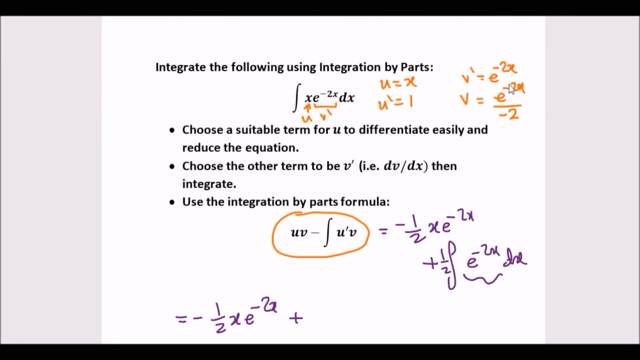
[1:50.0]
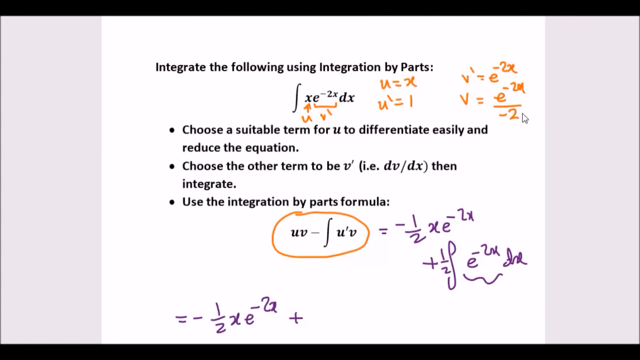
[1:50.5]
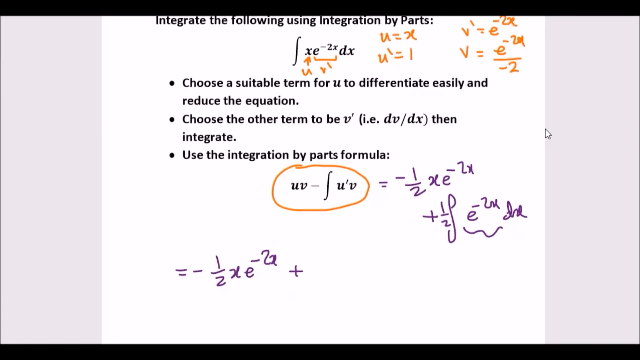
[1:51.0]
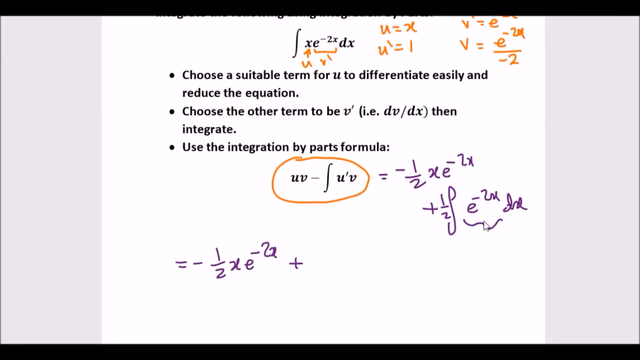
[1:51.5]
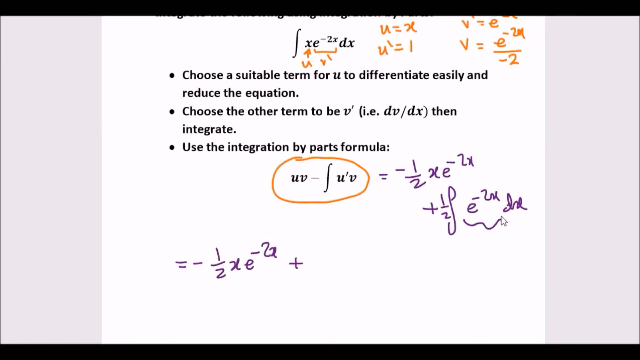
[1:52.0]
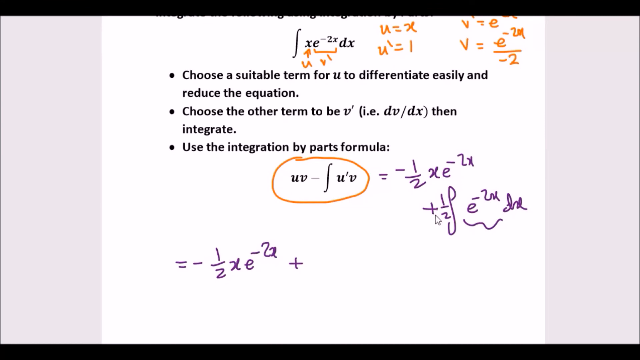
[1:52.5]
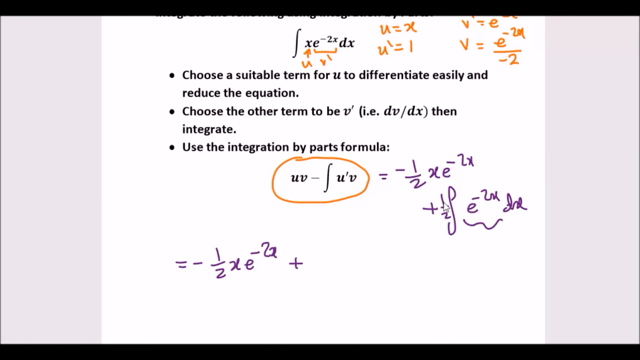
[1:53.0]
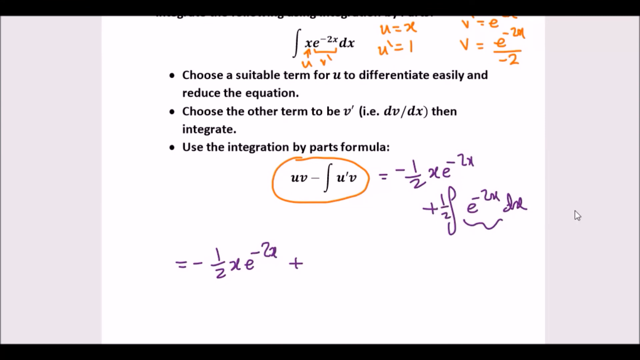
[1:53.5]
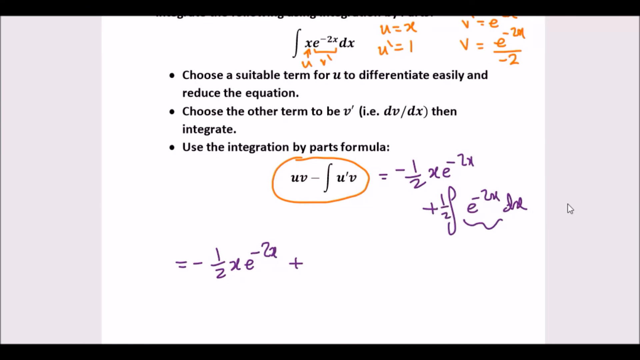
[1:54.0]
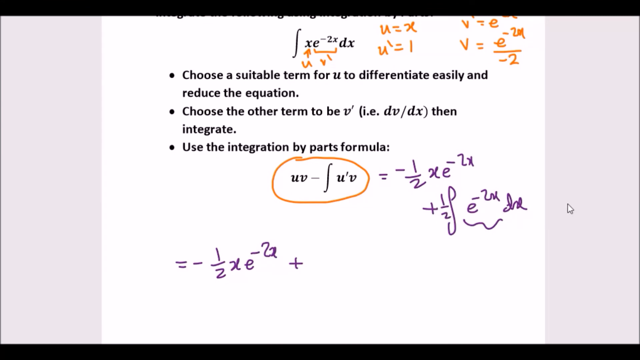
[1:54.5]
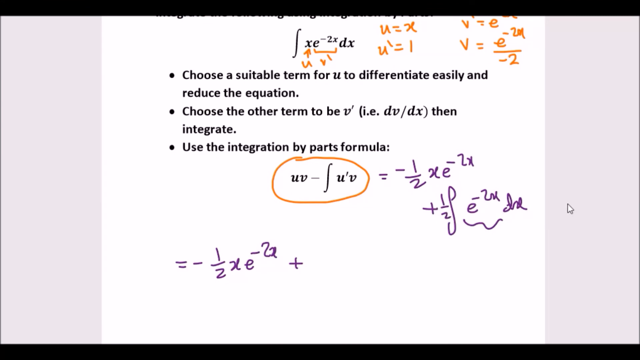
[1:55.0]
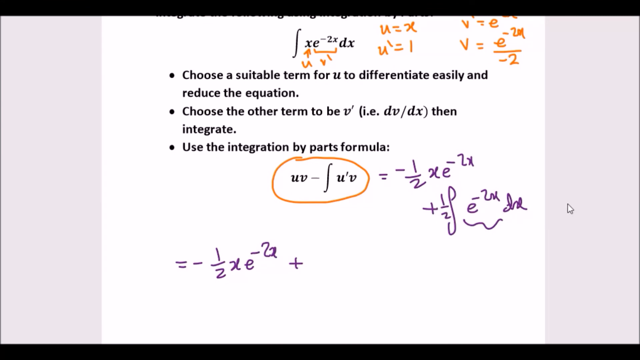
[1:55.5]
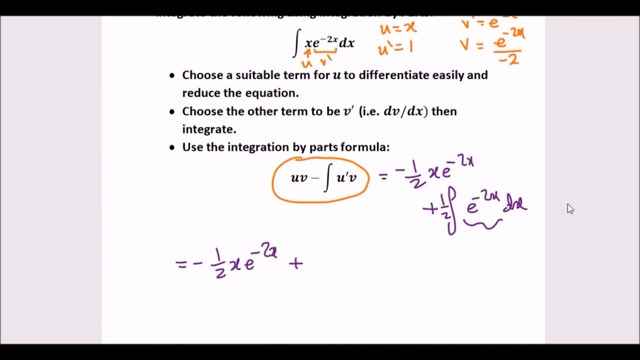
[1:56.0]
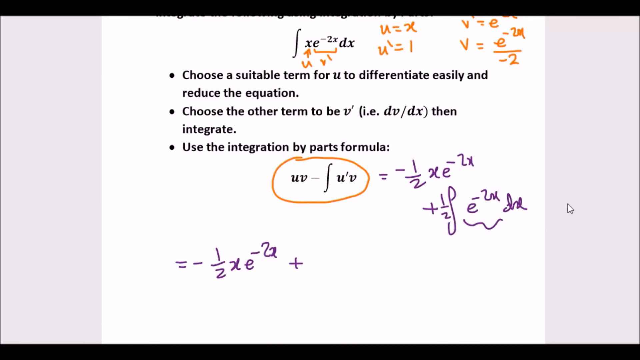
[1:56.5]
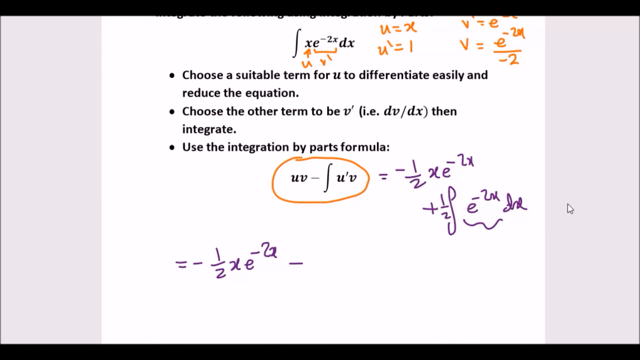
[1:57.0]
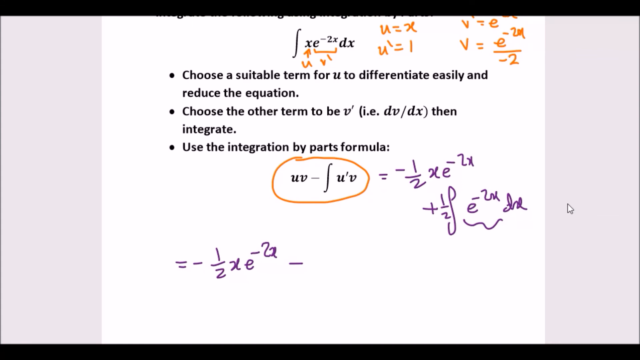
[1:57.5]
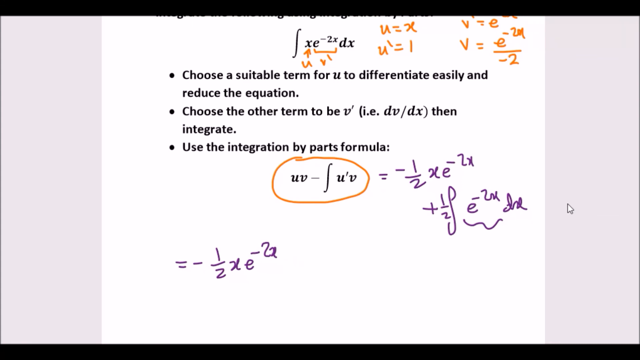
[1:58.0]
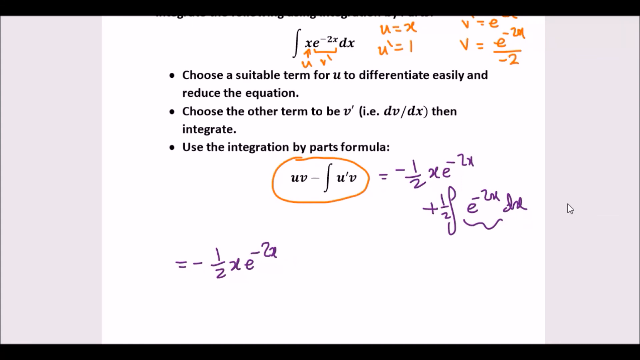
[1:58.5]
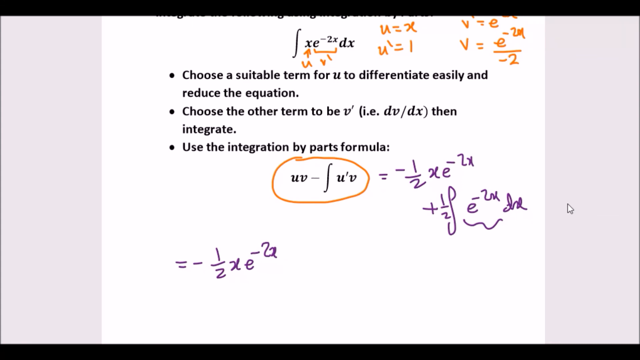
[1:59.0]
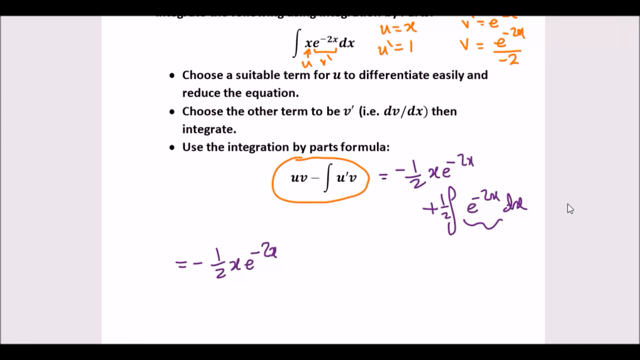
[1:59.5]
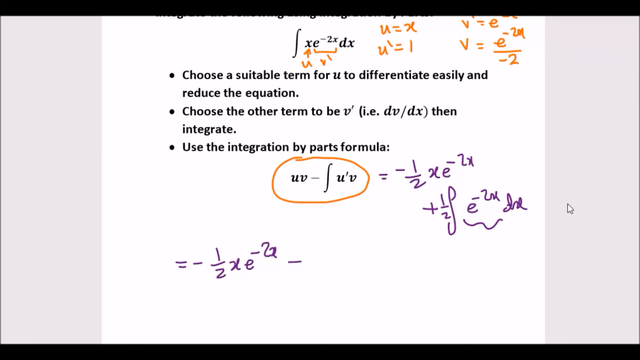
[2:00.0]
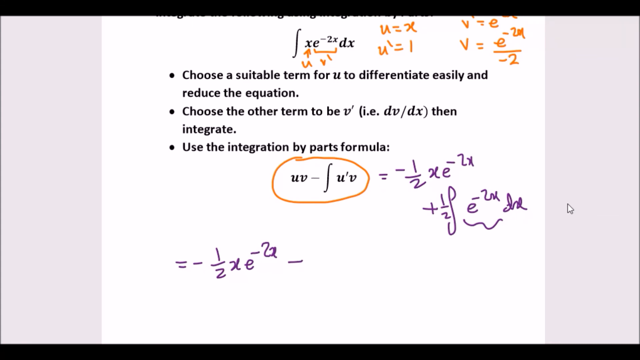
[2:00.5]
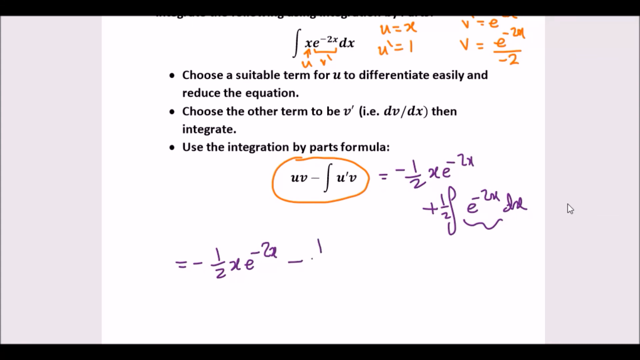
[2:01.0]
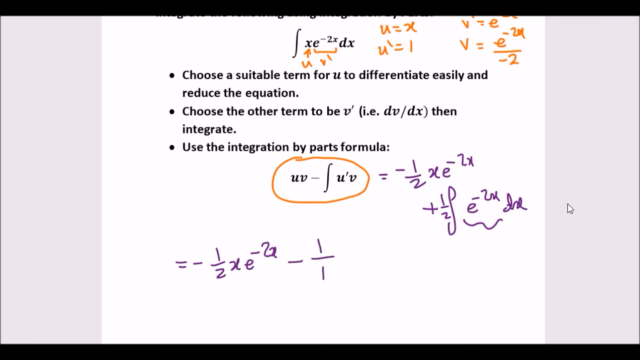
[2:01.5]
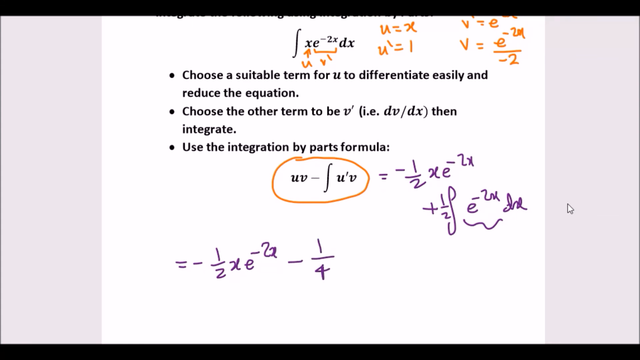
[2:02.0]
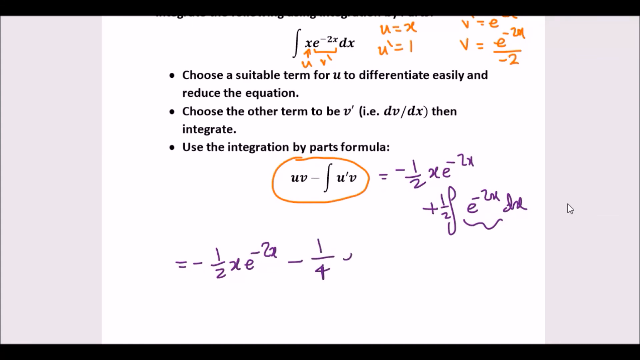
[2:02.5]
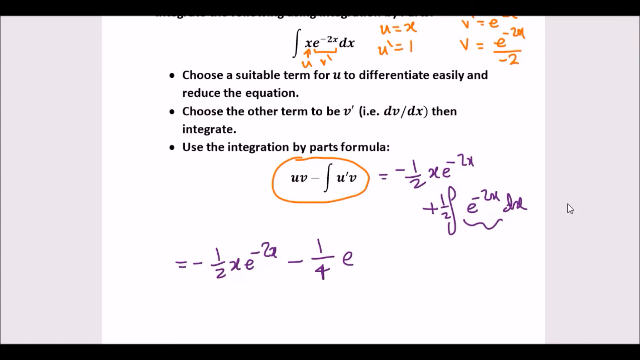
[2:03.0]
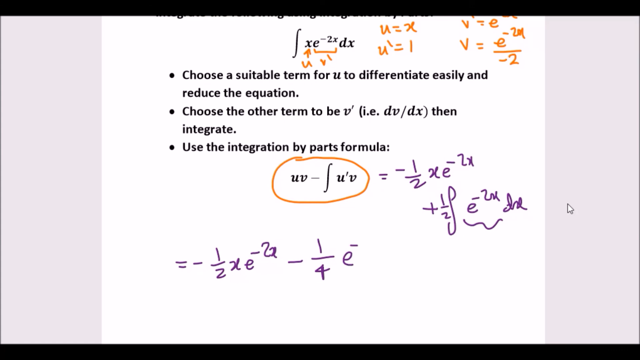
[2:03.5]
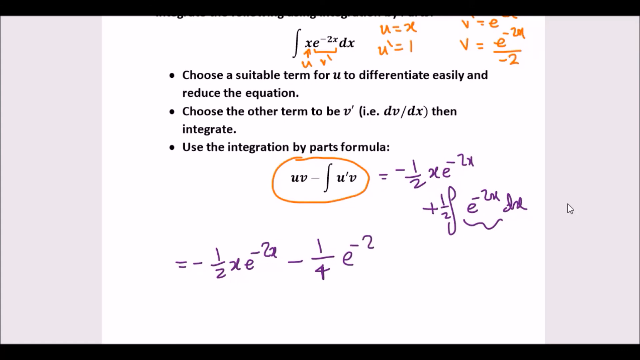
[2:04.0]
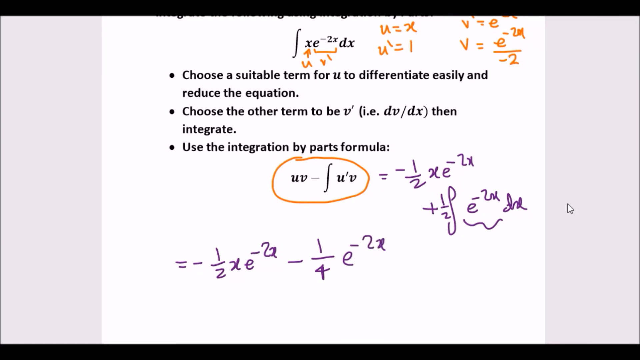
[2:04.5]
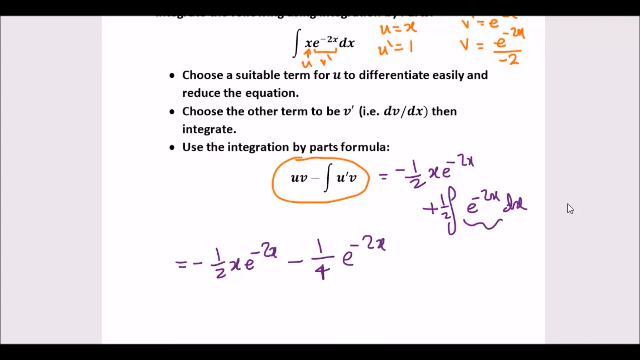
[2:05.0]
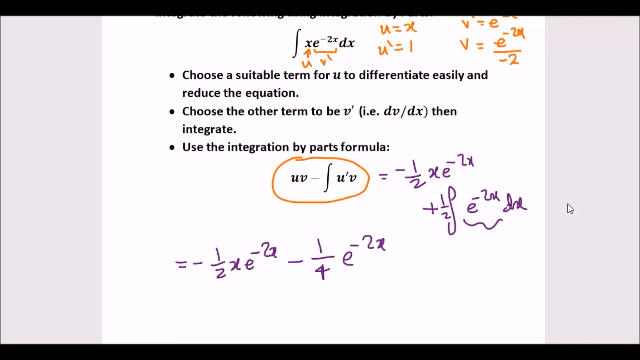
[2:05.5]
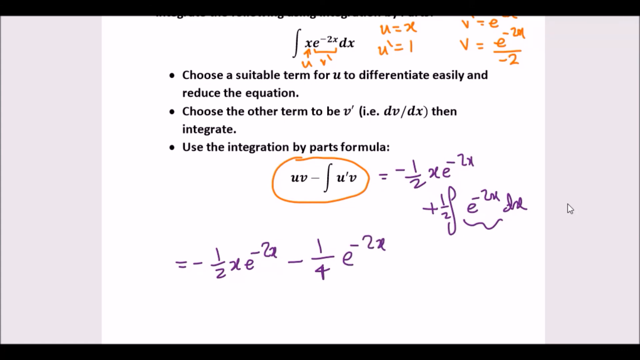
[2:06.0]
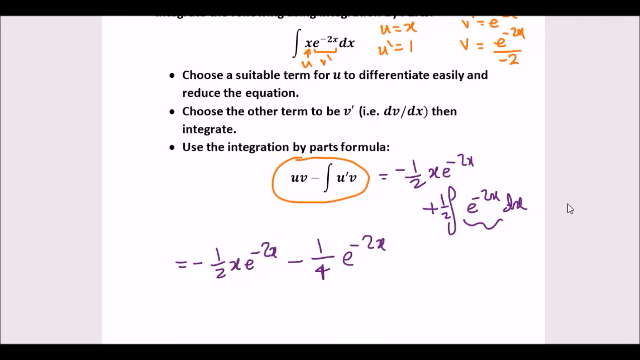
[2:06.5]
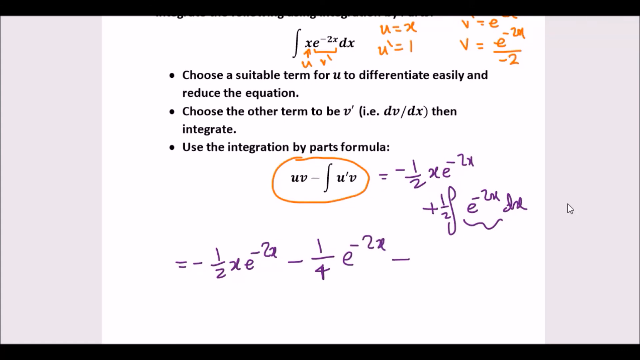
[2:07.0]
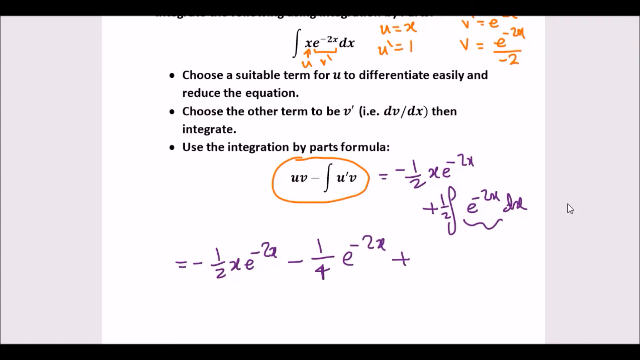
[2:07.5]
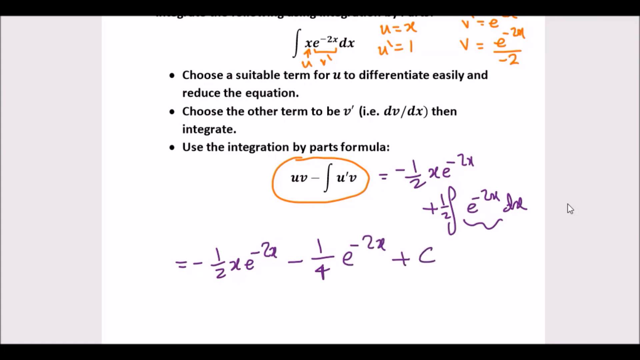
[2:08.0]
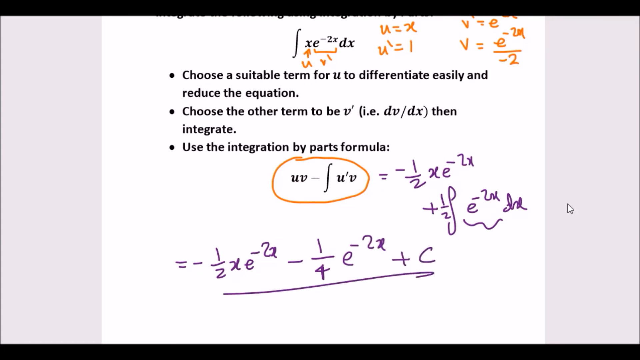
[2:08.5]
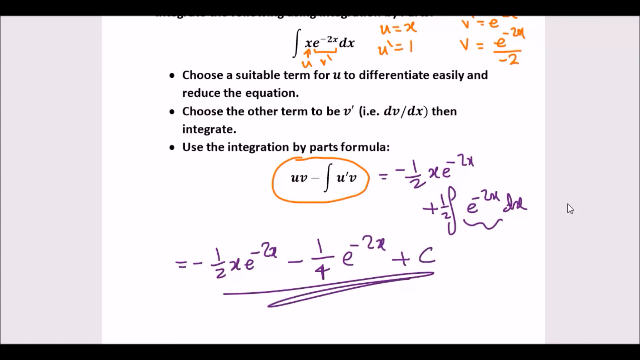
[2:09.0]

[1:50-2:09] The user highlights the result for v, which reads v equals e to the 2 minus x, all over minus 2, and then points to the integral written below it, plus a half the integral of e to the minus 2x times the derivative of x. The user then continues the formula in the wide space at the bottom of the slide, which now reads equals negative a half of x times e to the minus 2x minus a quarter of e to the minus 2x, plus c. Finally, the user underlines the whole formula with two lines, marking it as the final result.